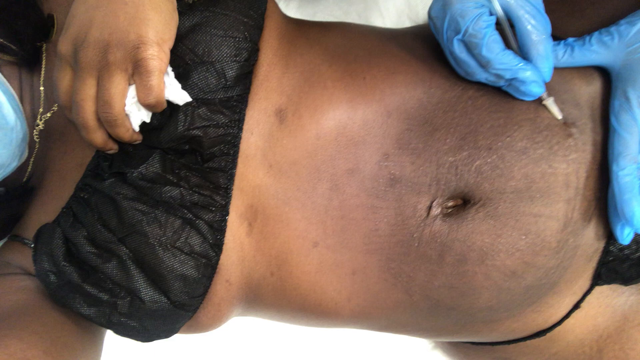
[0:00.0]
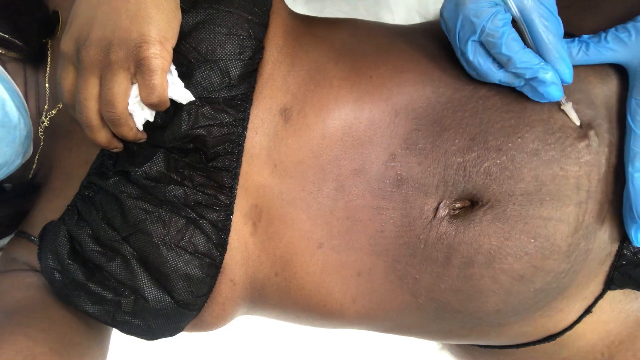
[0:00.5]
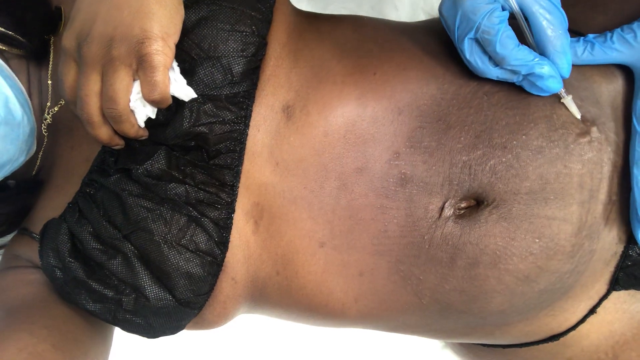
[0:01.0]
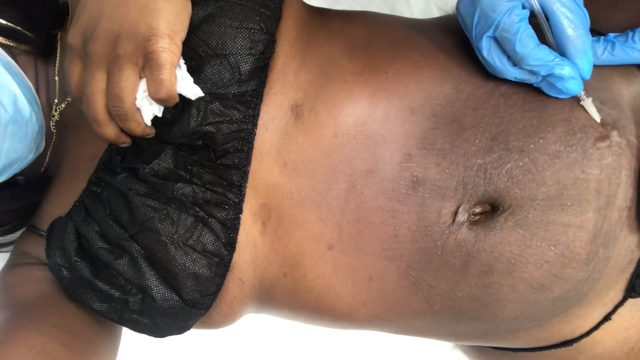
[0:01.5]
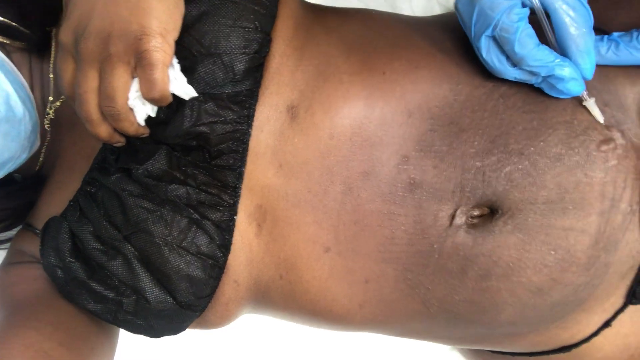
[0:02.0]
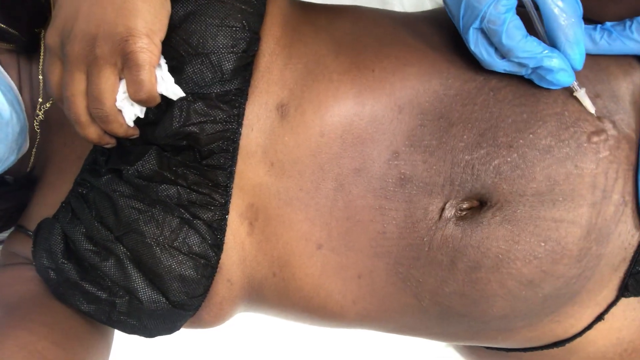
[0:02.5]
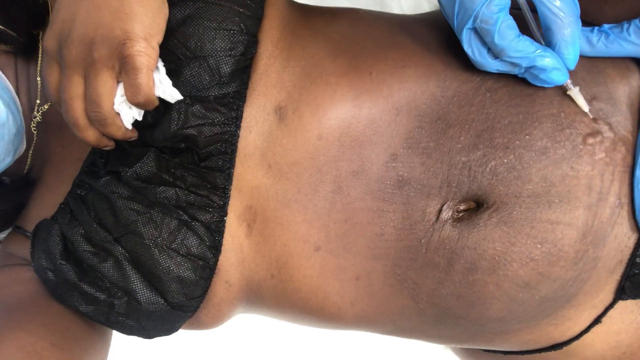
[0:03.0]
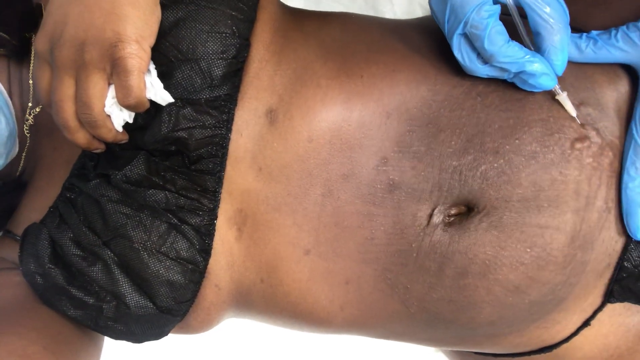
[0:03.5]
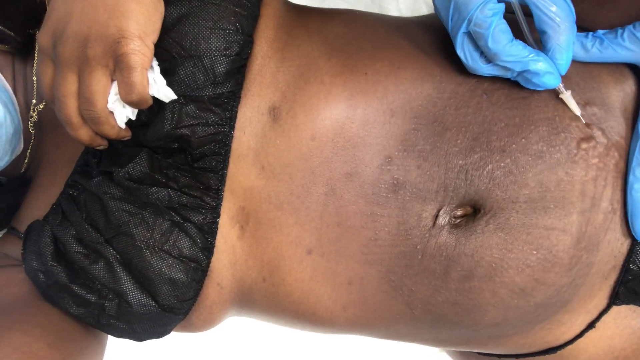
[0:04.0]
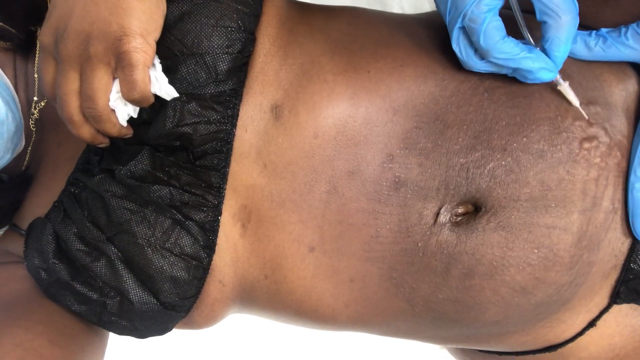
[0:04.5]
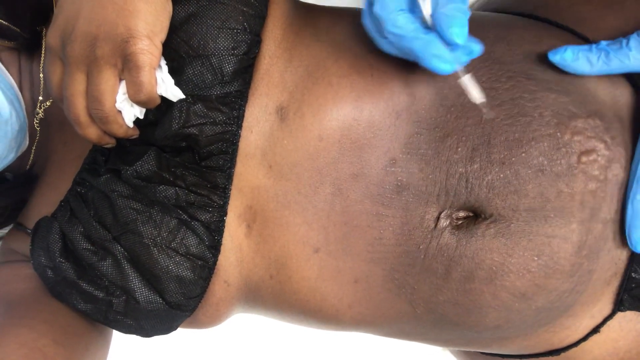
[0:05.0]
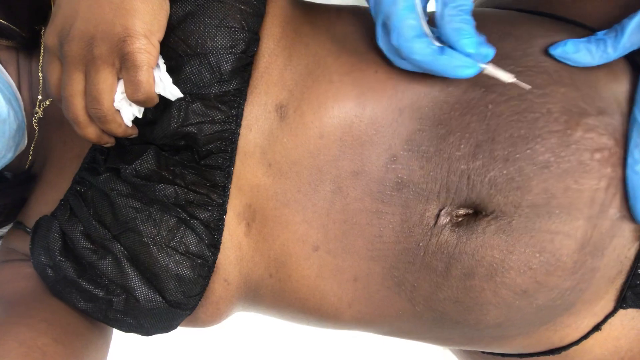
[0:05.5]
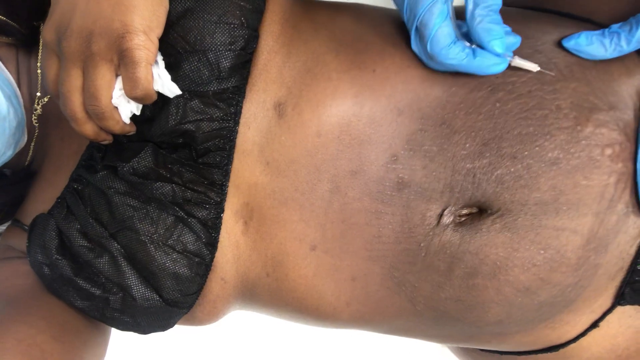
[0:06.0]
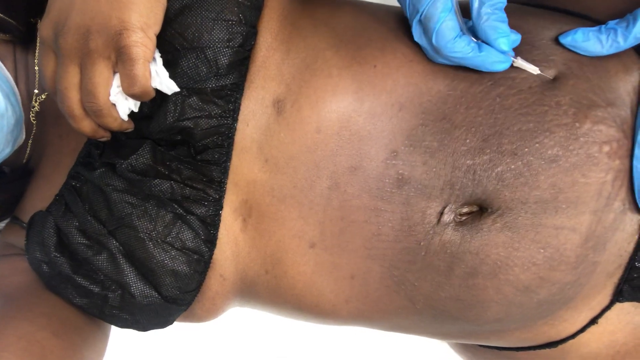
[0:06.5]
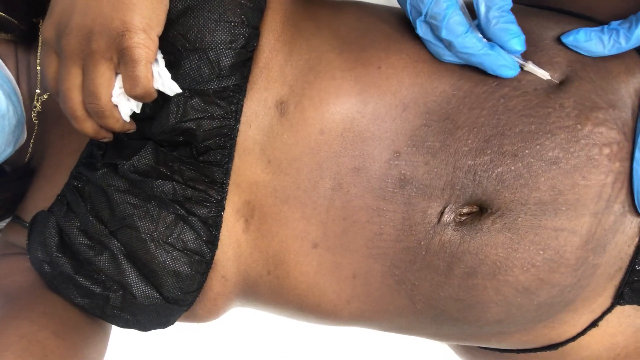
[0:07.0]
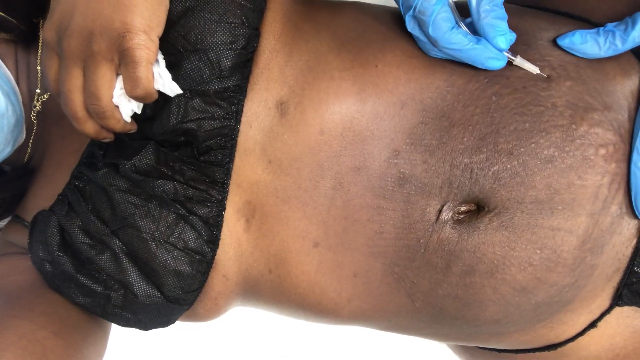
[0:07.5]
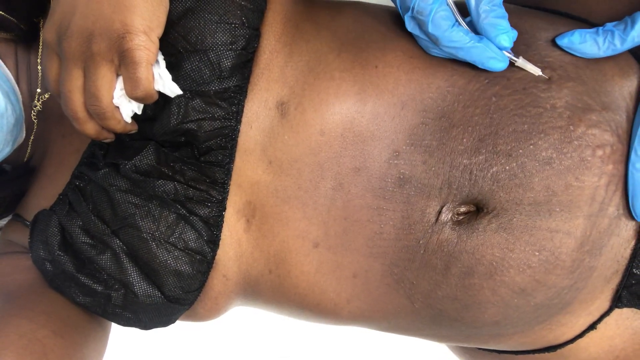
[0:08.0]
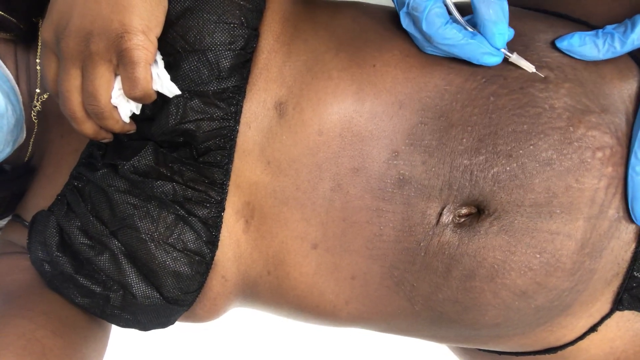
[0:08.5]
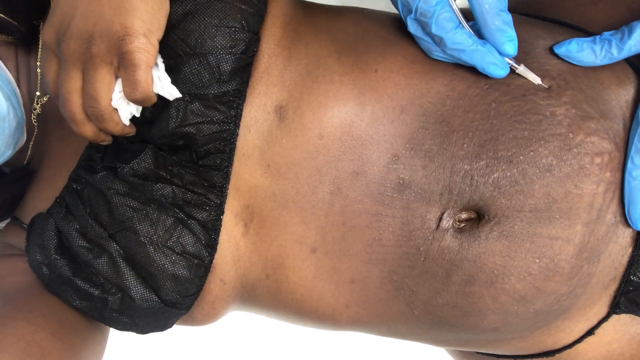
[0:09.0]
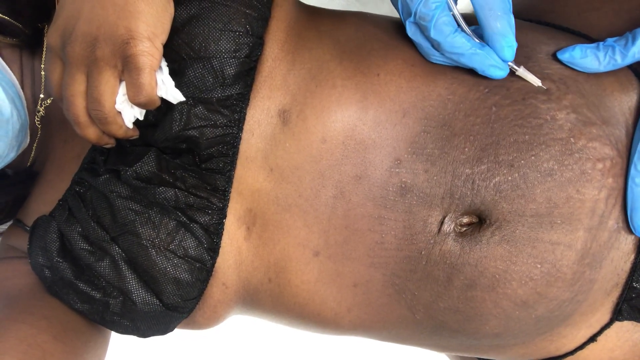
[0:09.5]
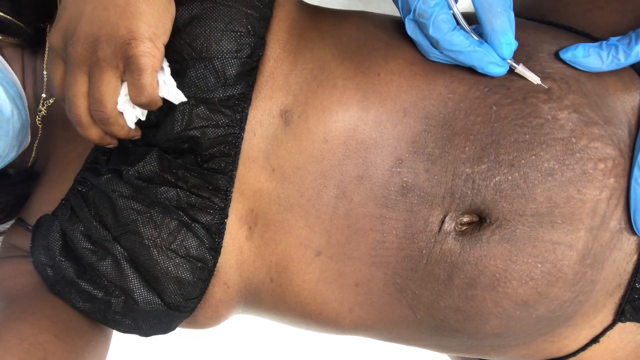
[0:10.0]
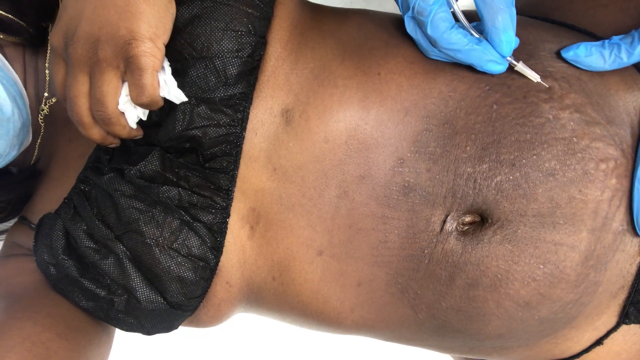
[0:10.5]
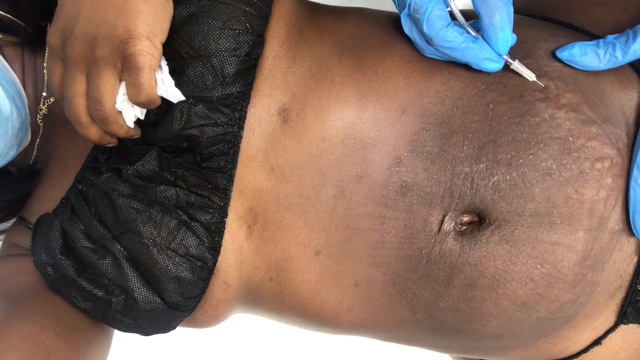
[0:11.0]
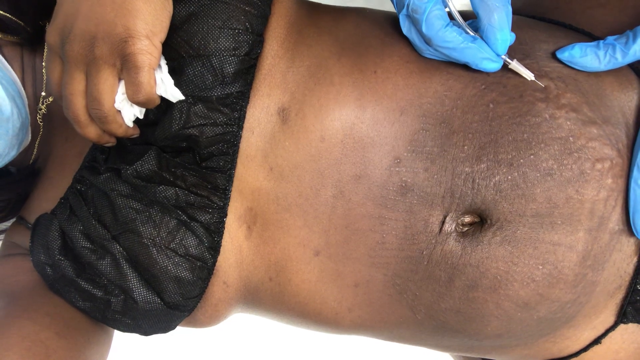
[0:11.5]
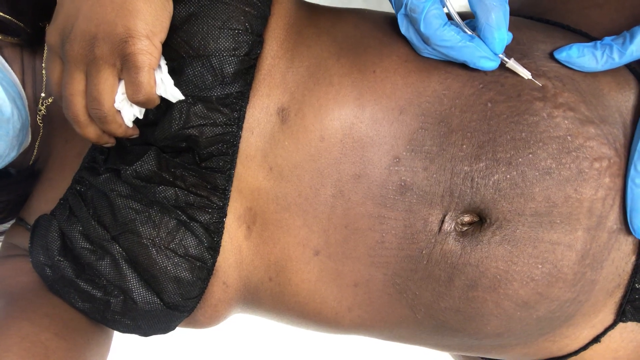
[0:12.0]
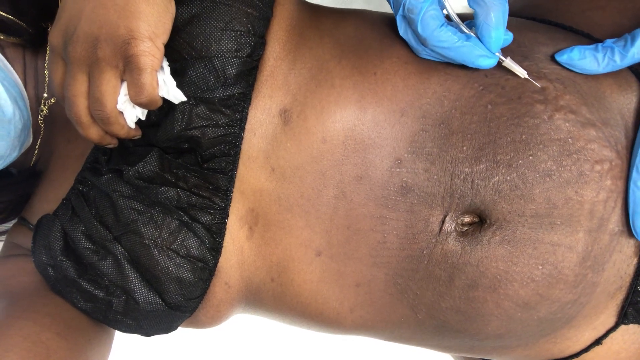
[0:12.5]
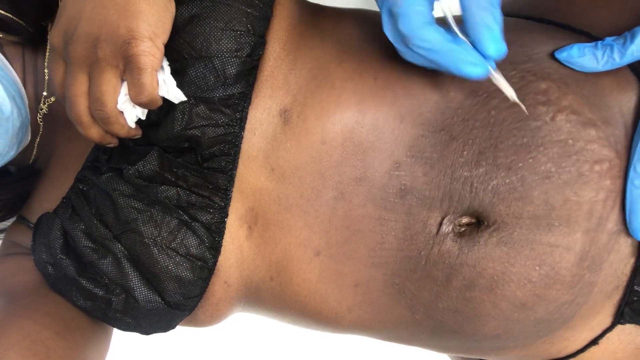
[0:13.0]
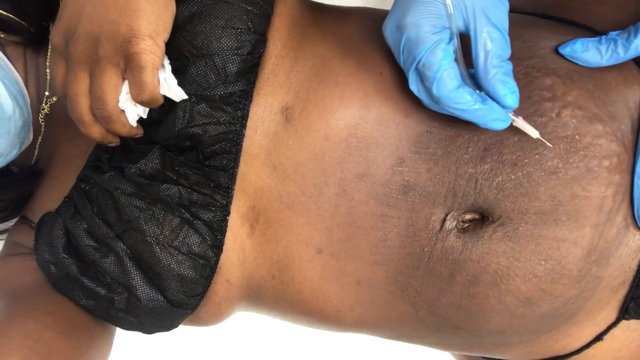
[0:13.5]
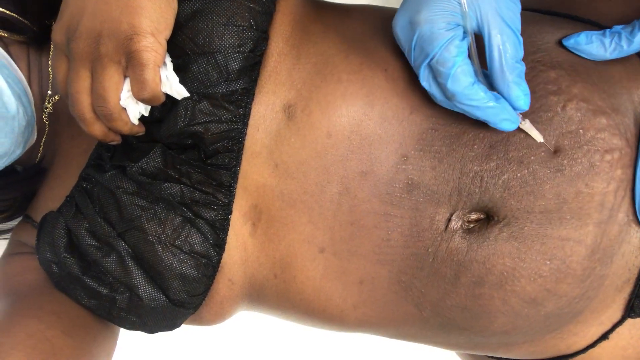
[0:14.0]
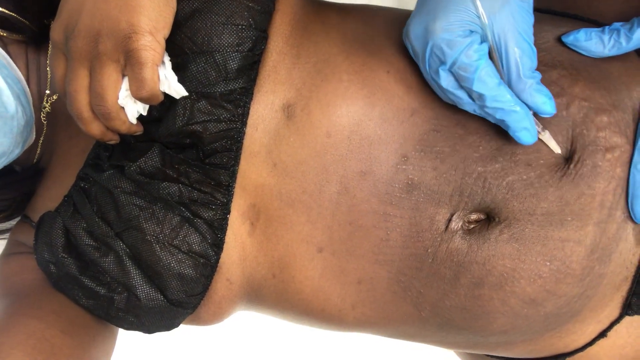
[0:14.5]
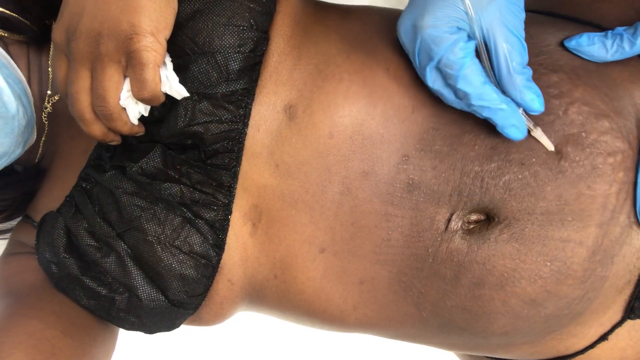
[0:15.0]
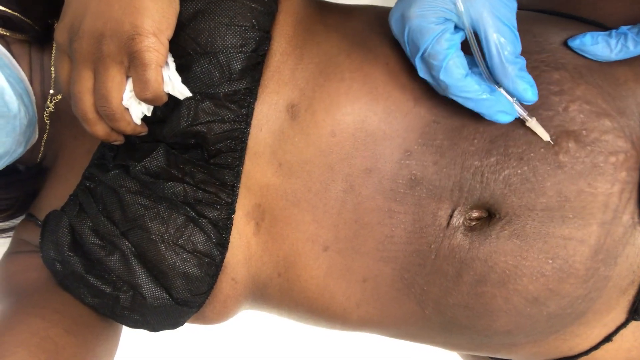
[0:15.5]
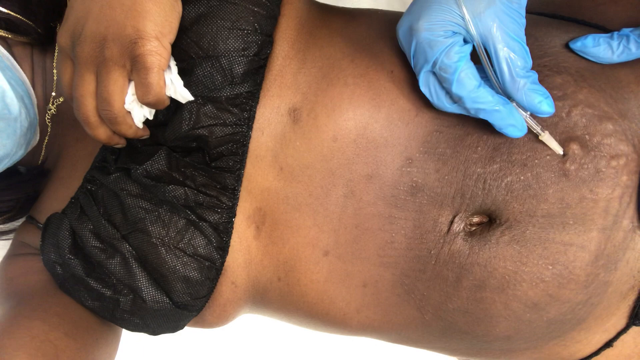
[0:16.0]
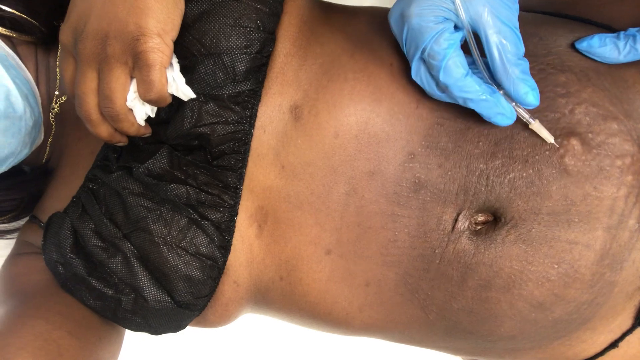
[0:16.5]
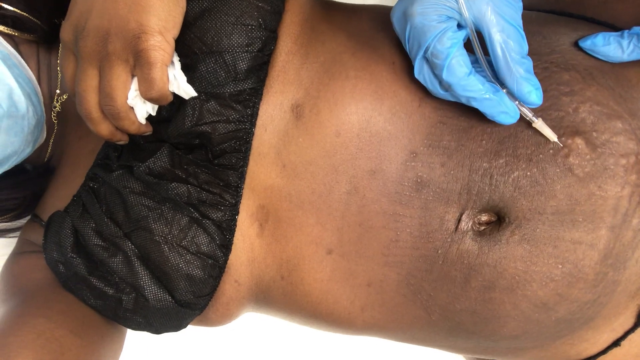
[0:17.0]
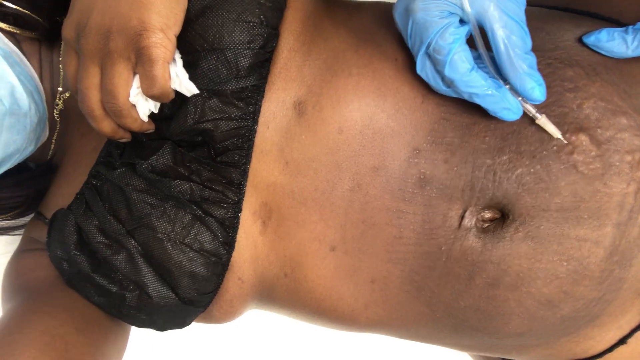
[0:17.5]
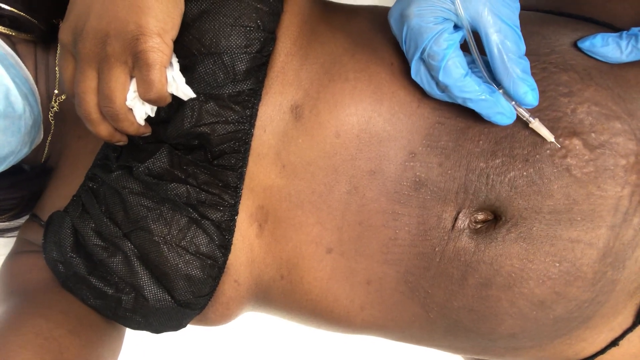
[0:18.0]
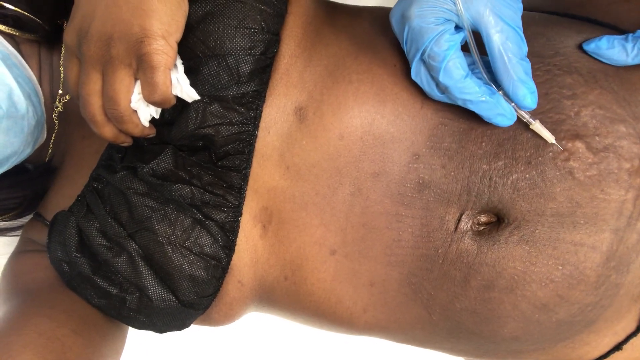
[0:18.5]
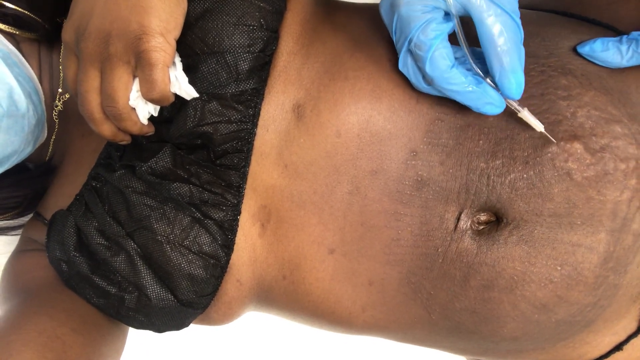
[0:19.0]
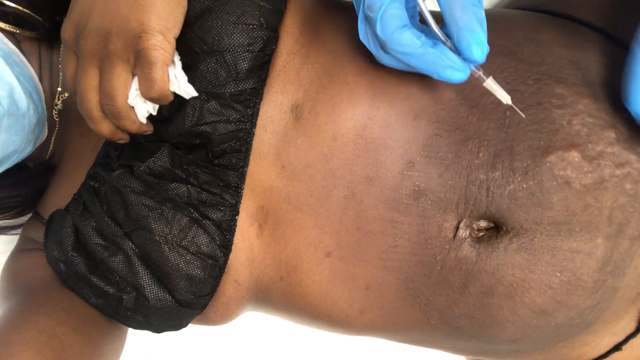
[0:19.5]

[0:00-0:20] A brown-skinned woman lies horizontally to the camera, which has obviously been placed overhead above some sort of medical or surgery table-style structure. She wears a gold chain necklace and a face mask like a medical mask. A person holds a tissue and wipes down her chest area, which is covered by some sort of black fabric bra resembling patient gowns, apparently some sort of surgical clothing worn during a procedure, and a black thong-style piece of underwear on the right covers her groin. Near her groin, a different person wearing blue latex gloves inserts a needle or catheter with a white tip and a tube attached to it into the side of her stomach, to the right of her belly button. As the procedure progresses, the needle is moved up and down slightly and then punctures a different area of skin, closer to directly right of the belly button rather than down below. It appears that something is either being injected into or sucked out of her body through the attached tube.